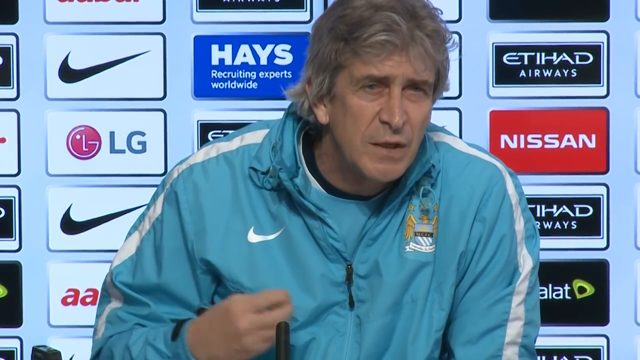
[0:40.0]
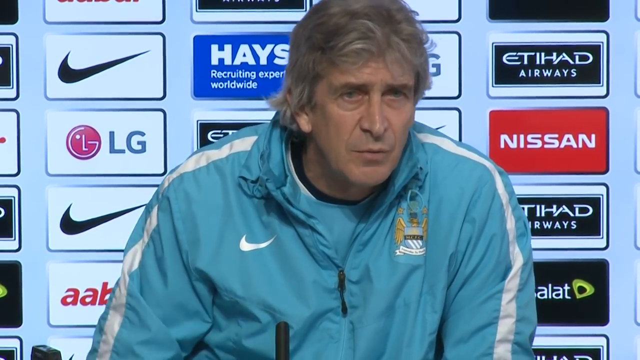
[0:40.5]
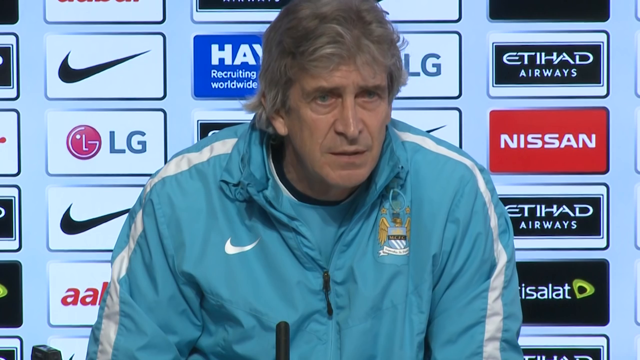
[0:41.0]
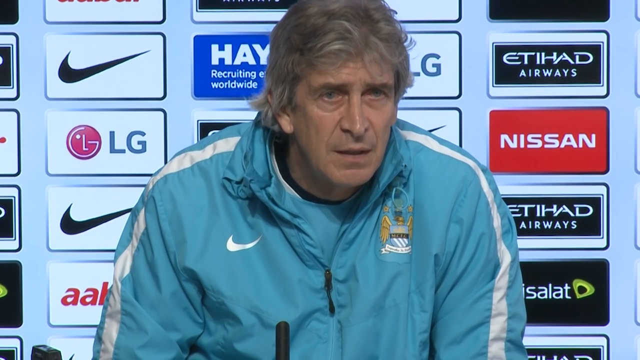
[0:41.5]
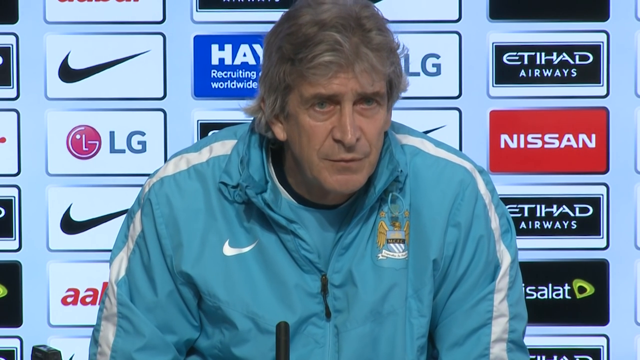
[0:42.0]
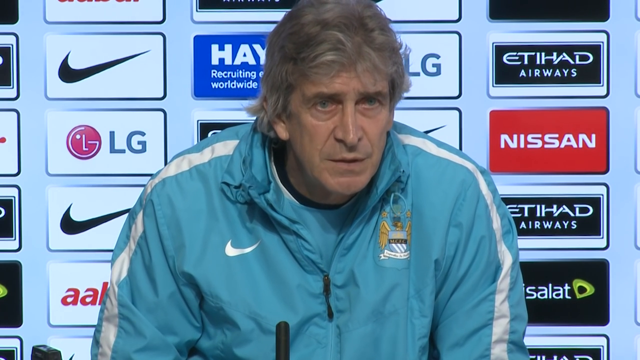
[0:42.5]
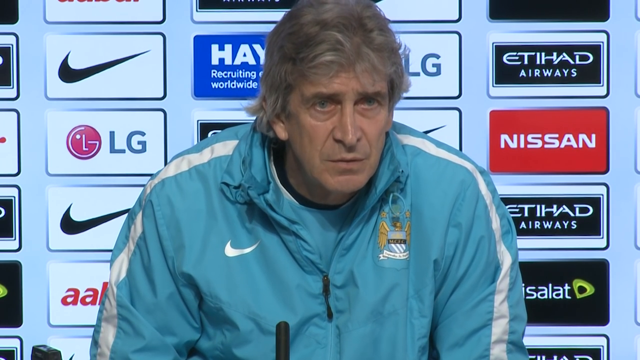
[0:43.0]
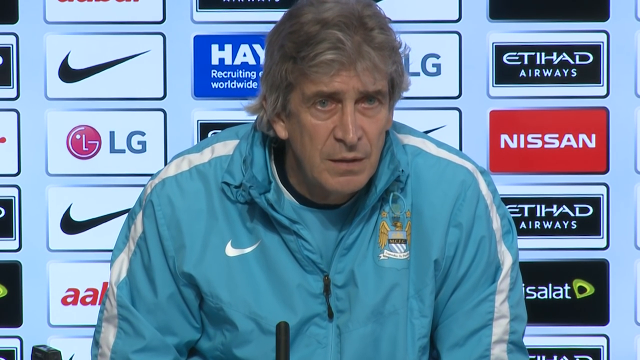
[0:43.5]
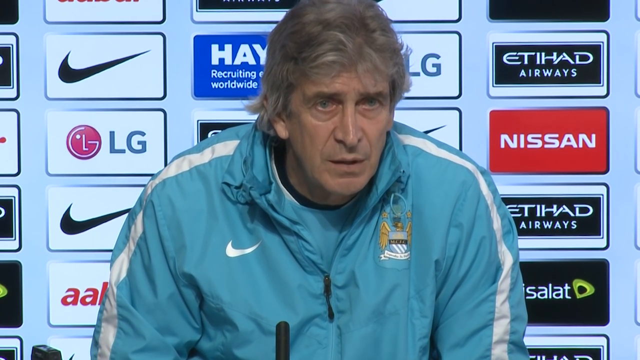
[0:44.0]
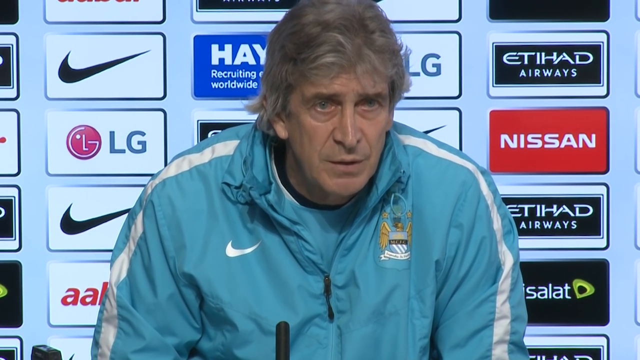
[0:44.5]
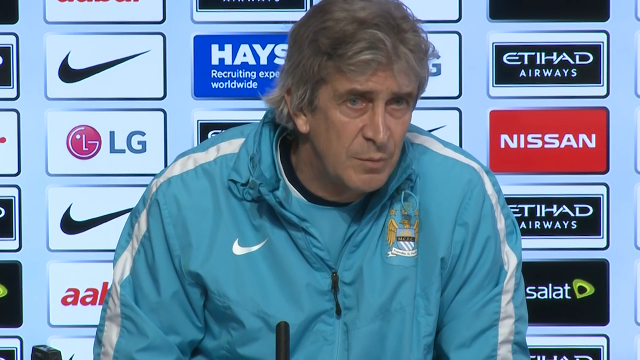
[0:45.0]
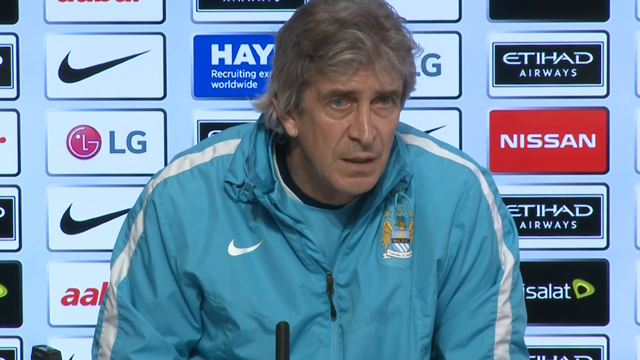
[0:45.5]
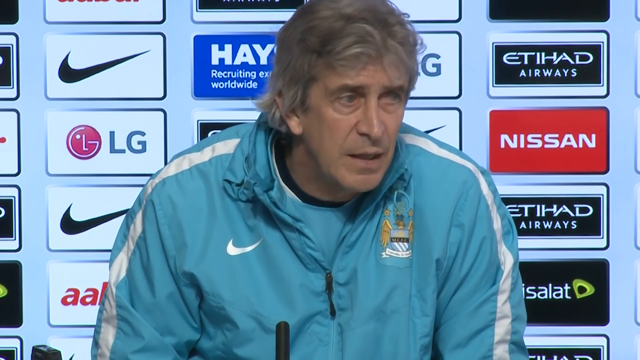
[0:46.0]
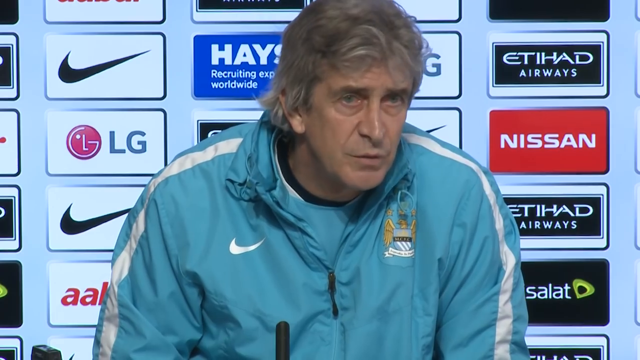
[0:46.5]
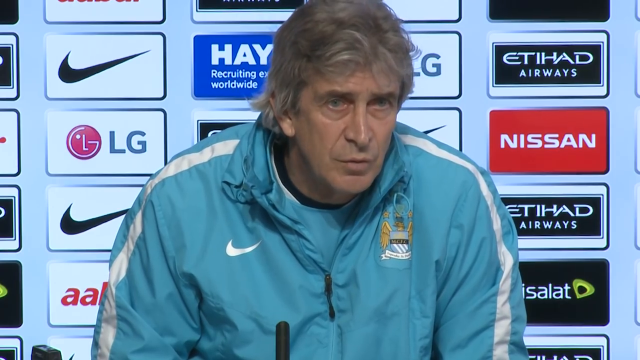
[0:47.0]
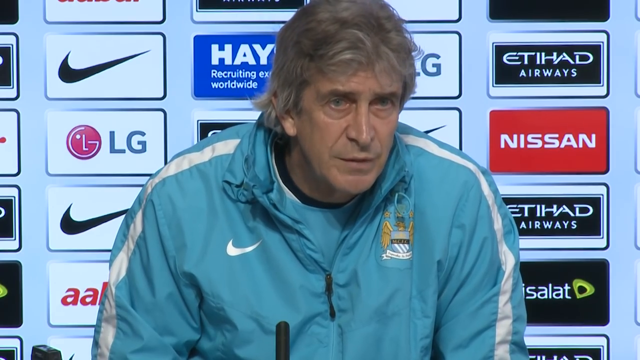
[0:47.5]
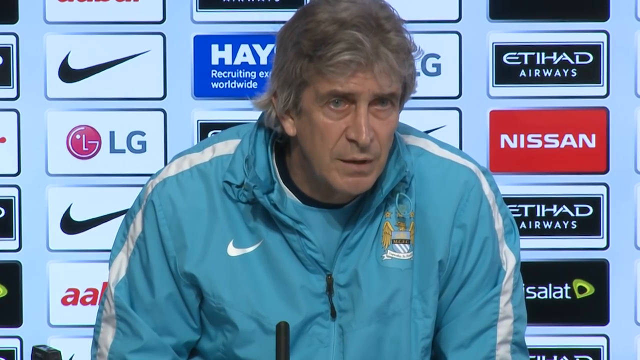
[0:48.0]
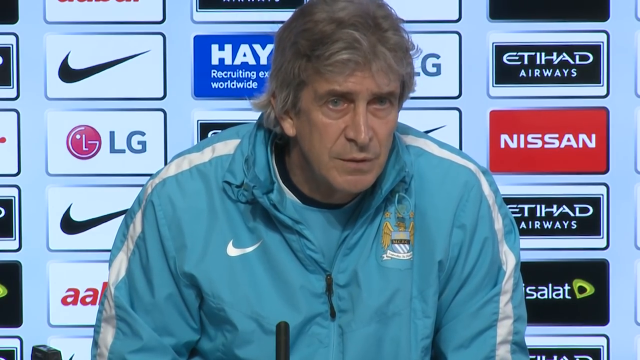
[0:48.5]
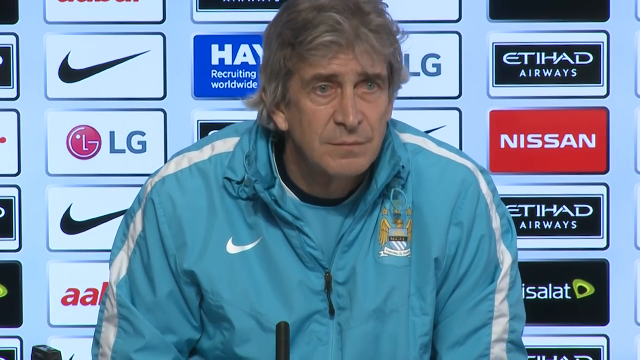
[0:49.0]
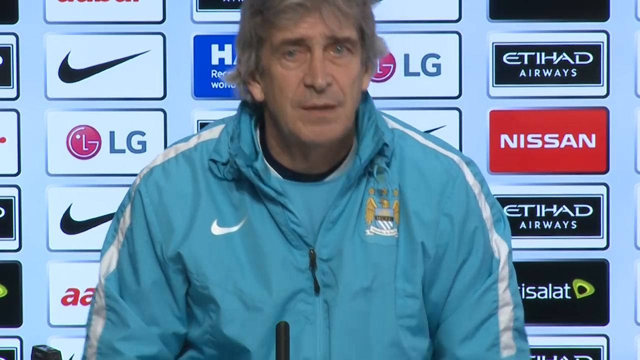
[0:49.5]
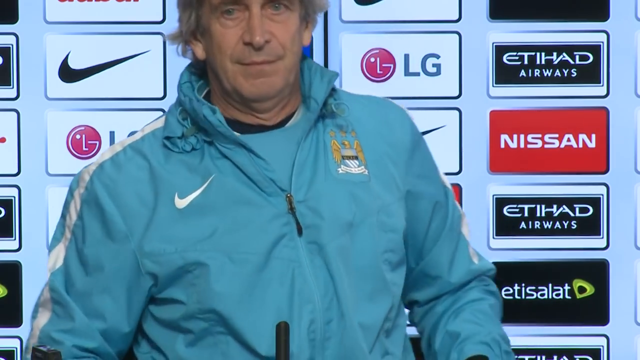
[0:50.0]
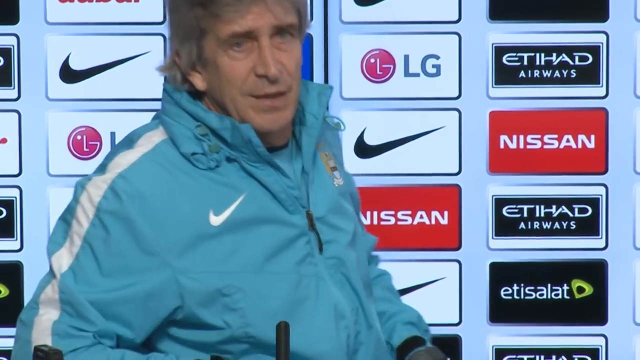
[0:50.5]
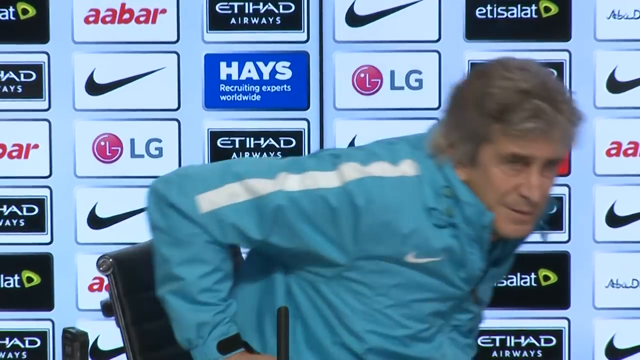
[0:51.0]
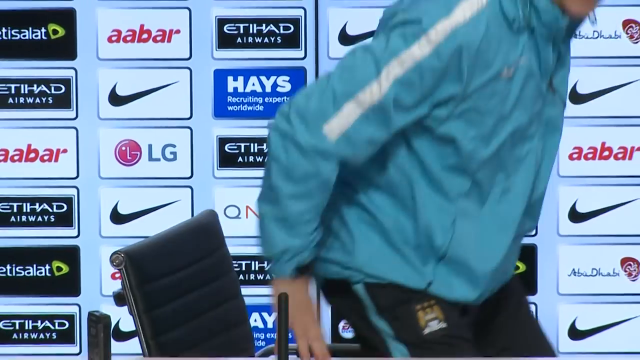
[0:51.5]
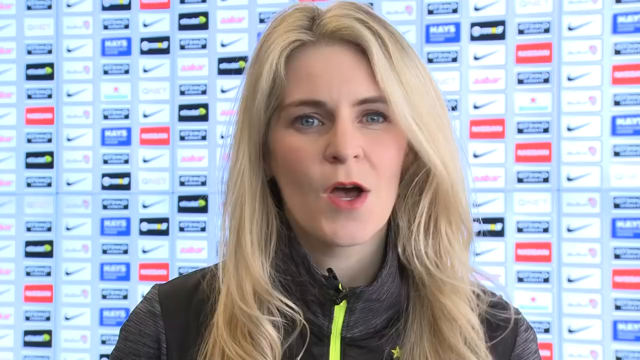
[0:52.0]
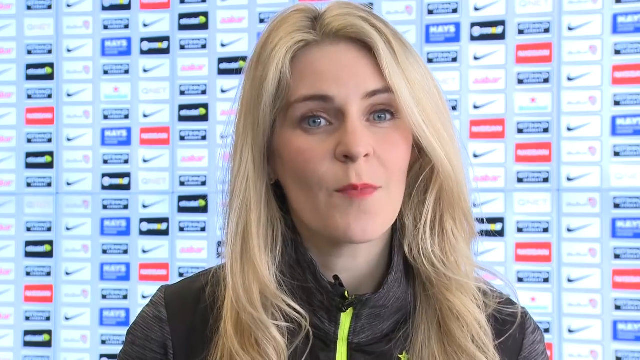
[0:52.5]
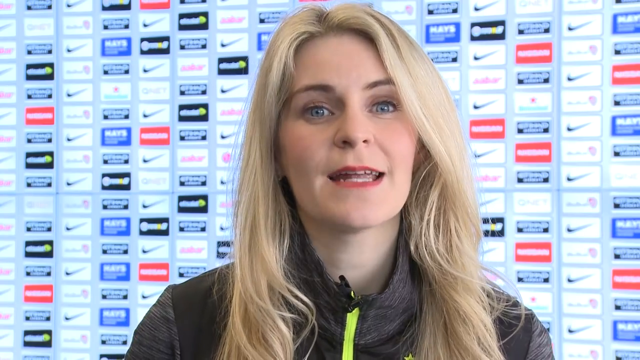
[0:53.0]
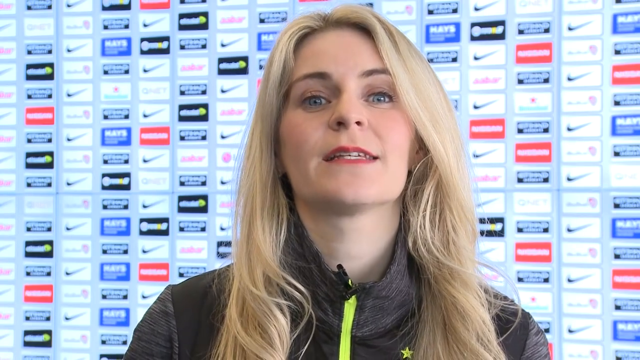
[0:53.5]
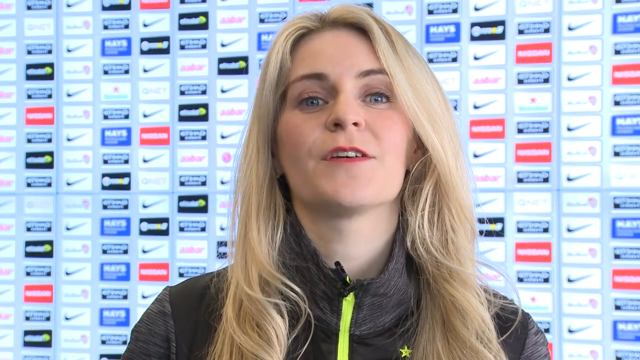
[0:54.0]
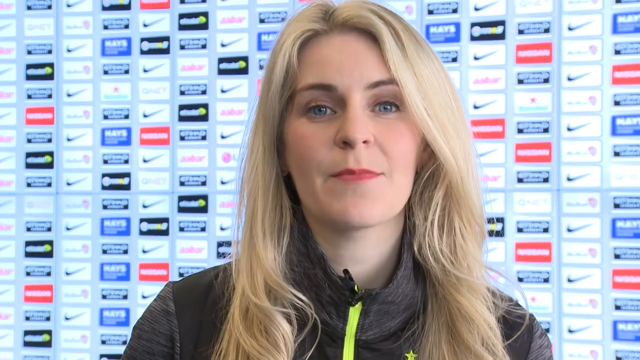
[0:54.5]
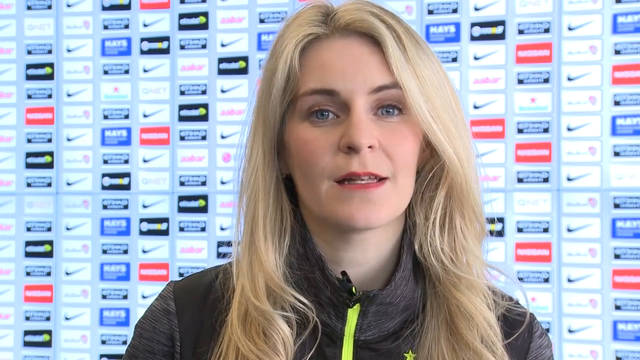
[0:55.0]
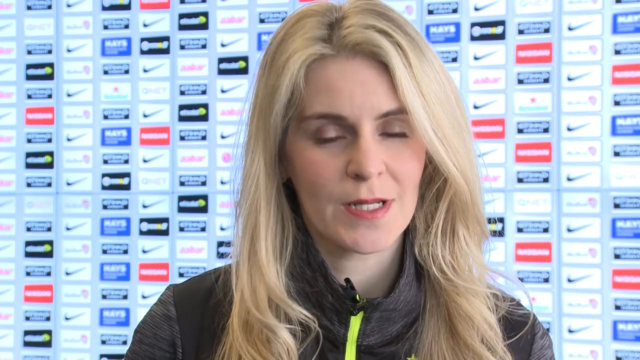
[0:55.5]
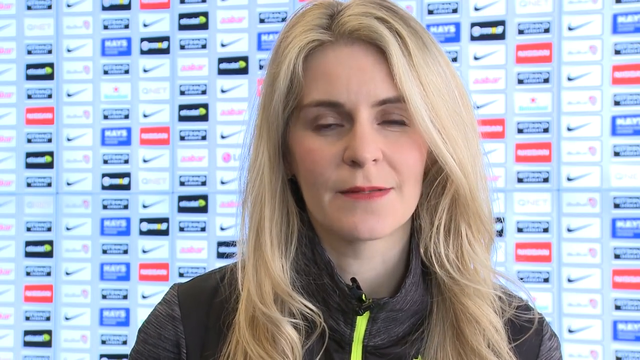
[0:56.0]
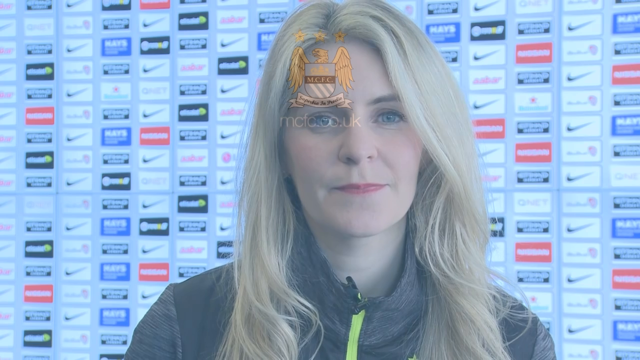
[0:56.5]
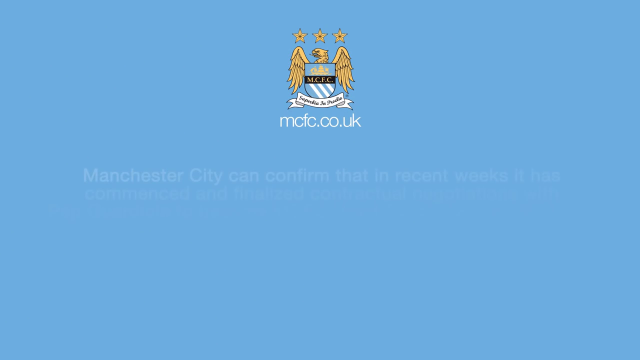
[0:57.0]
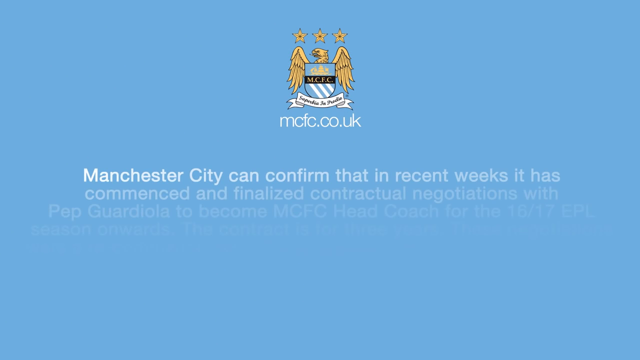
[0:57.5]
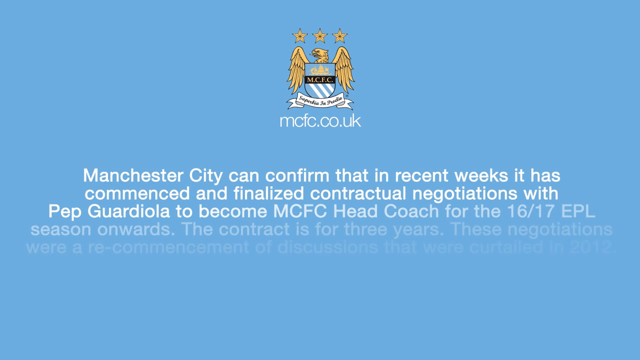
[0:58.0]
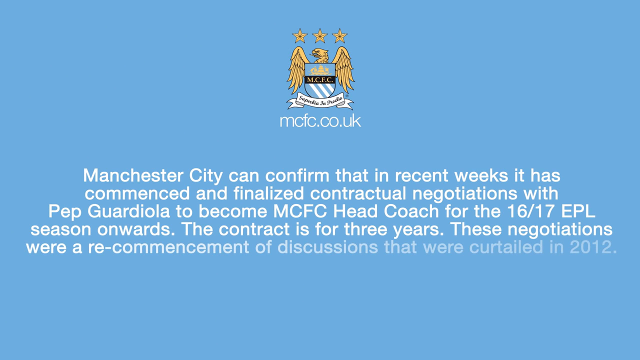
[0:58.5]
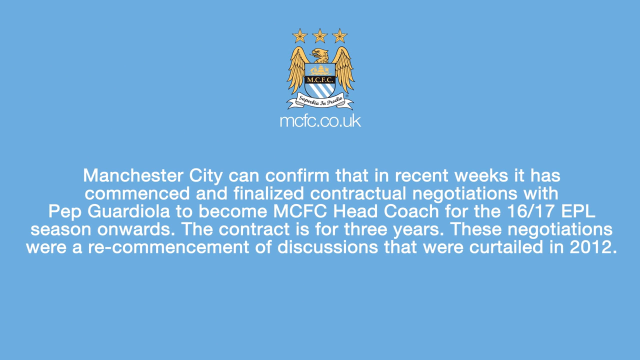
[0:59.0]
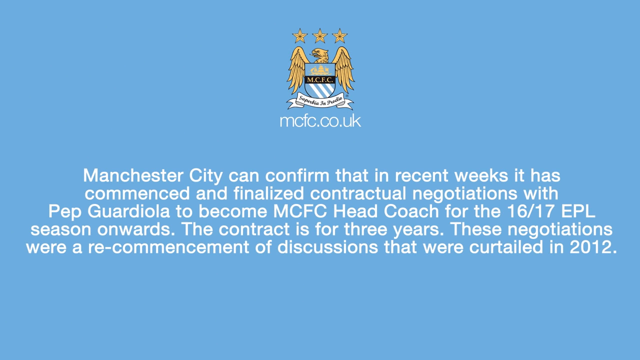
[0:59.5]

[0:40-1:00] The man with grey hair and the light blue Nike windbreaker is still sitting hunched forward, speaking to the camera. He moves his head in a motion towards his left, his eyes following the direction of his head. He quickly nods, sits backwards, sort of sticks his chest out and rises from his chair, pushing off the chair with his right hand and then sort of wiping it on his right leg. The camera cuts to a blonde woman with straight hair and red lipstick talking to the camera, wearing a dark black turtleneck coat with a bright green zipper down the middle. As she speaks she nods her head, closing her eyes while nodding, then blinks once. The camera then cuts to a blue screen with a logo at the top: a coat of arms with a golden eagle behind it and three stars in a row above.